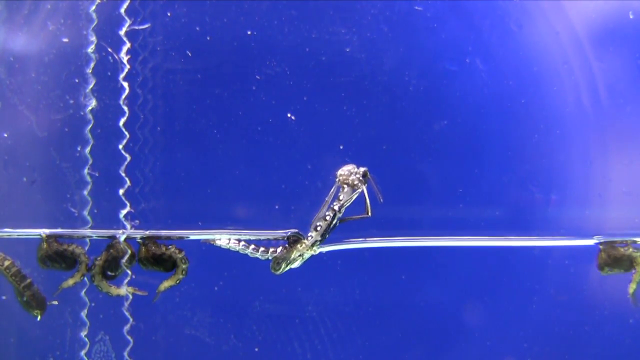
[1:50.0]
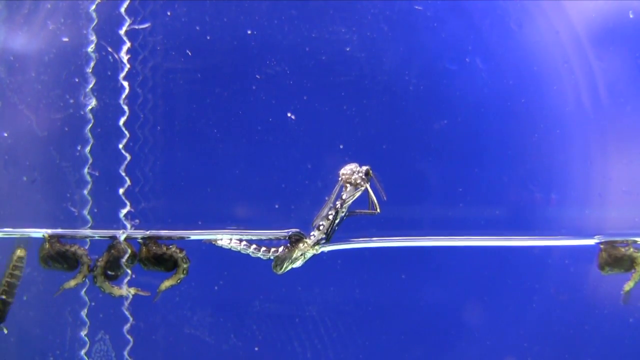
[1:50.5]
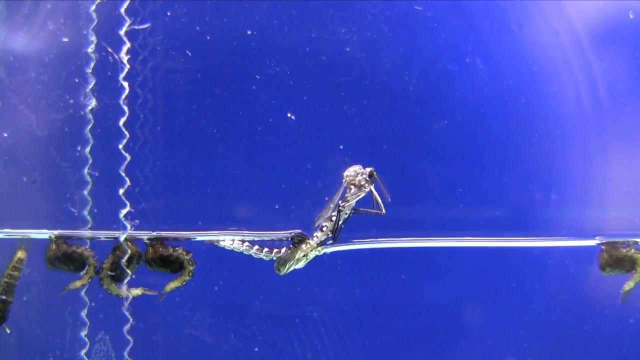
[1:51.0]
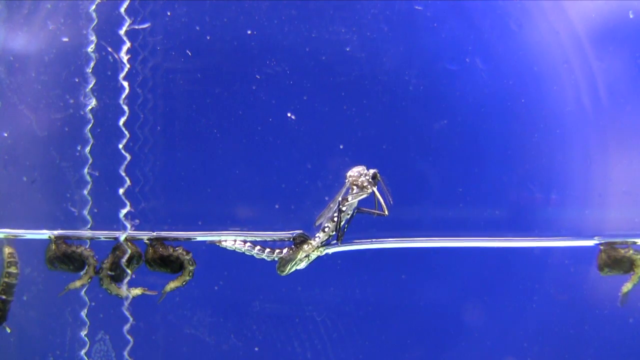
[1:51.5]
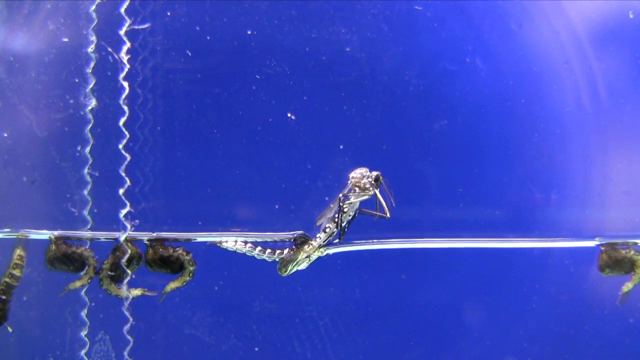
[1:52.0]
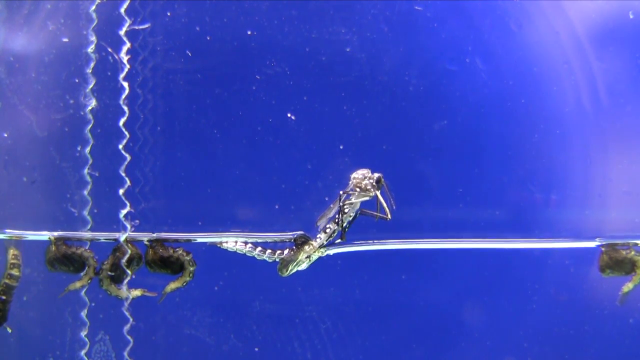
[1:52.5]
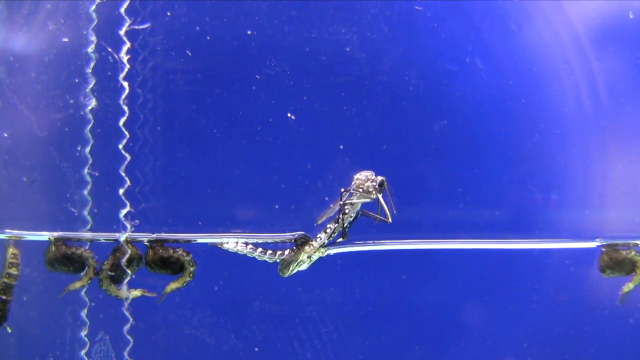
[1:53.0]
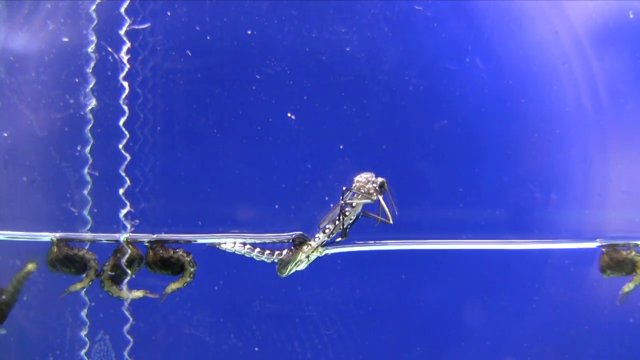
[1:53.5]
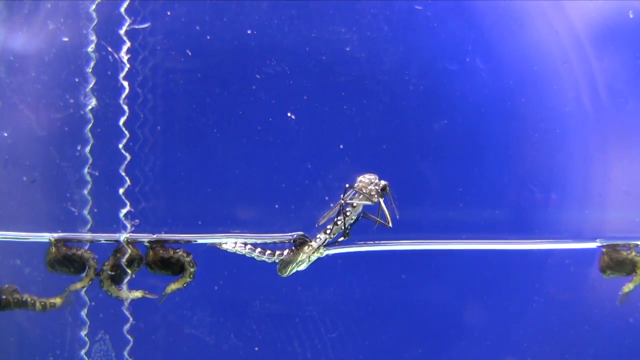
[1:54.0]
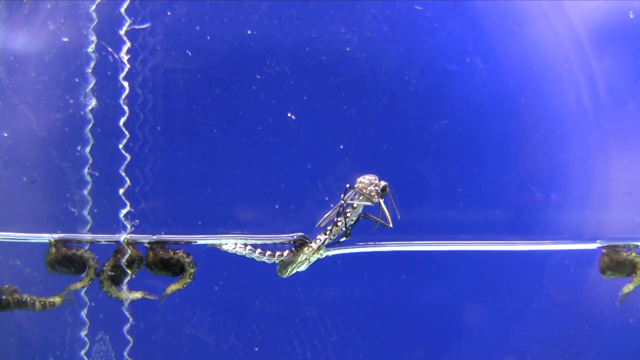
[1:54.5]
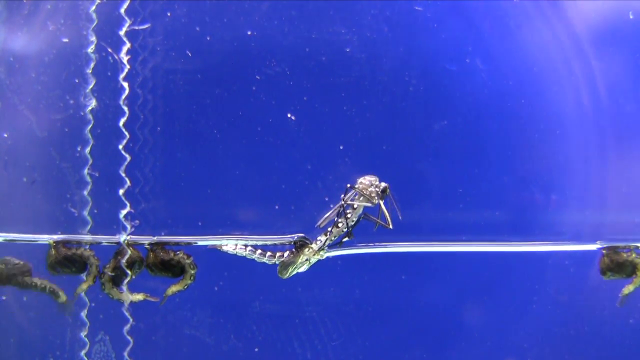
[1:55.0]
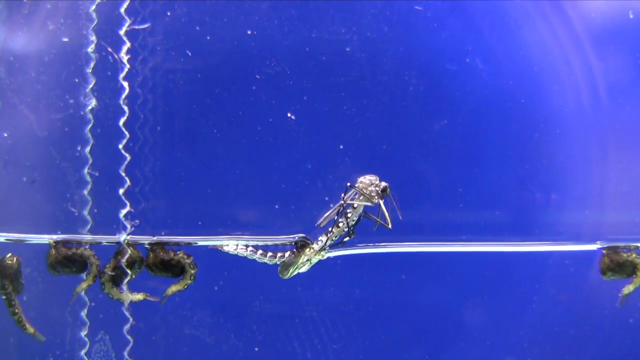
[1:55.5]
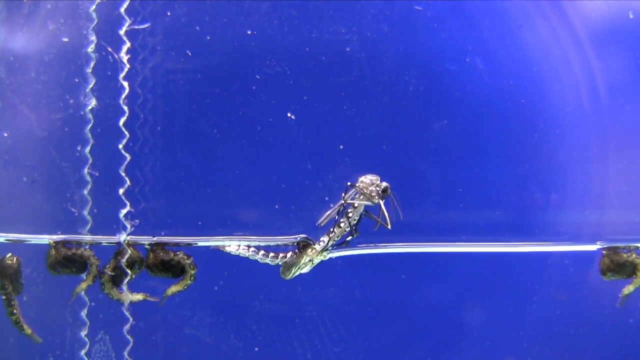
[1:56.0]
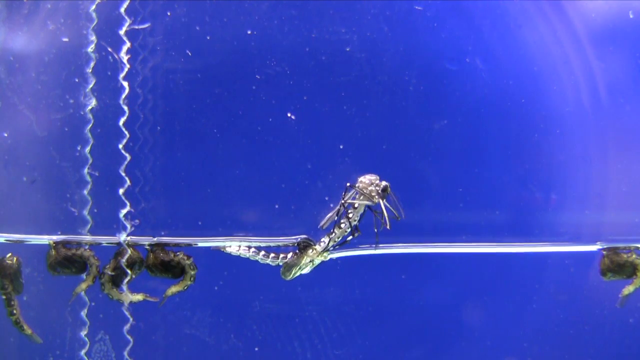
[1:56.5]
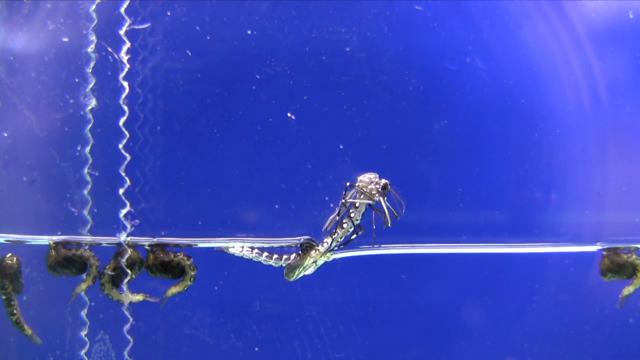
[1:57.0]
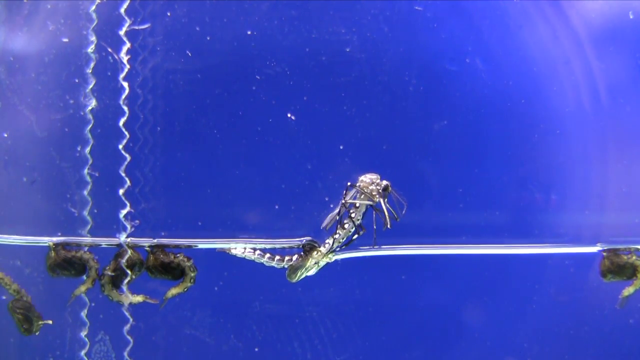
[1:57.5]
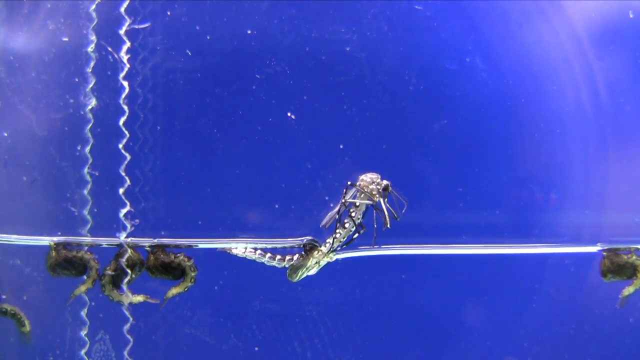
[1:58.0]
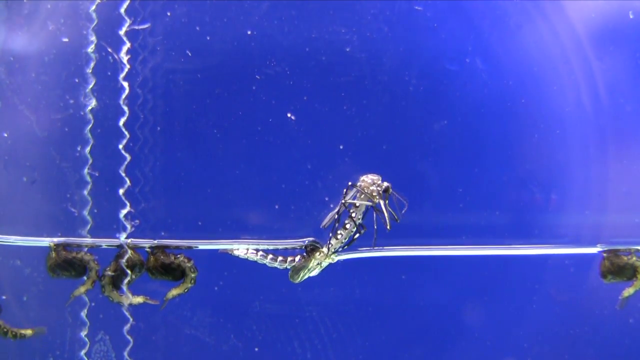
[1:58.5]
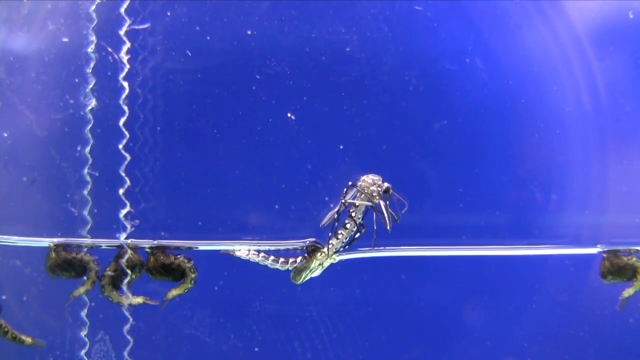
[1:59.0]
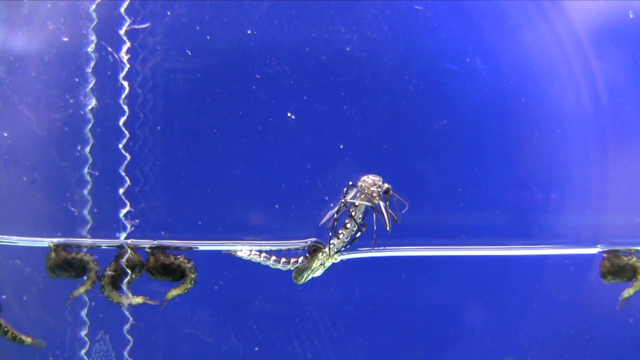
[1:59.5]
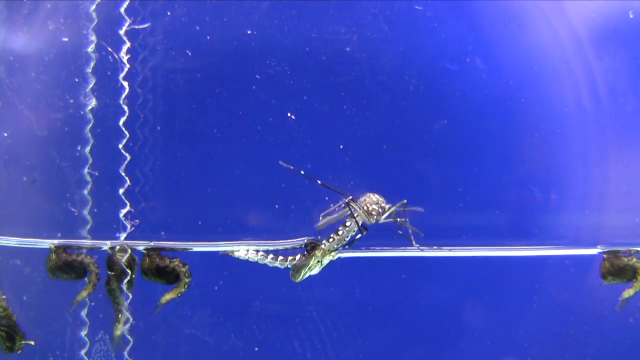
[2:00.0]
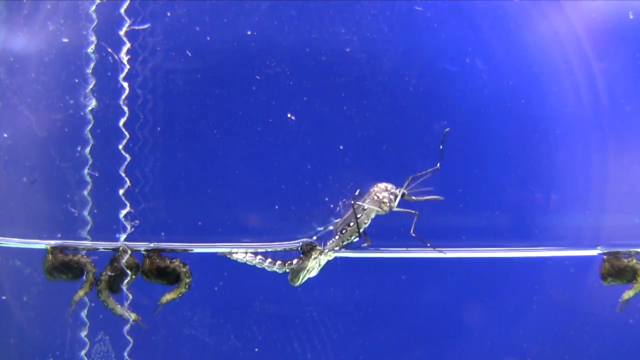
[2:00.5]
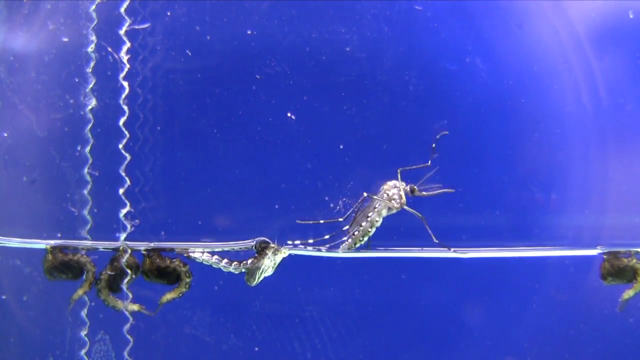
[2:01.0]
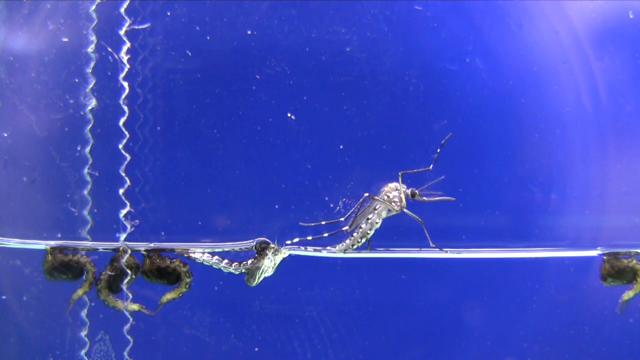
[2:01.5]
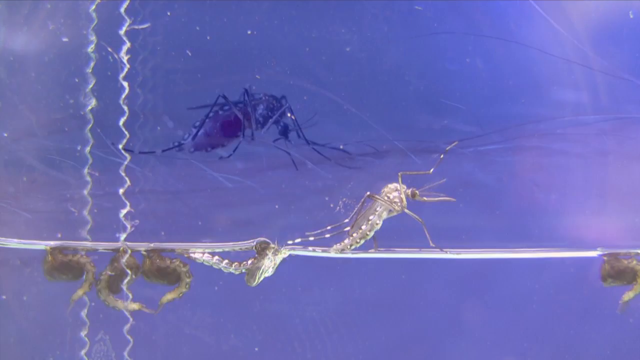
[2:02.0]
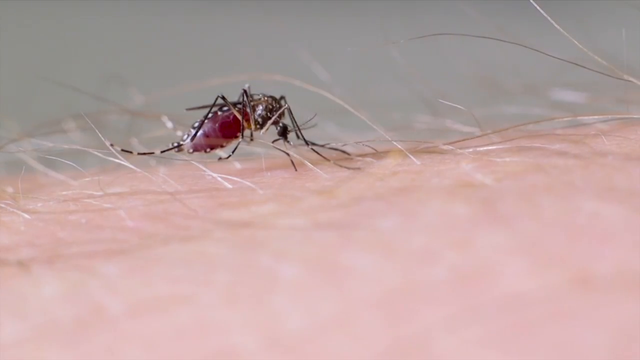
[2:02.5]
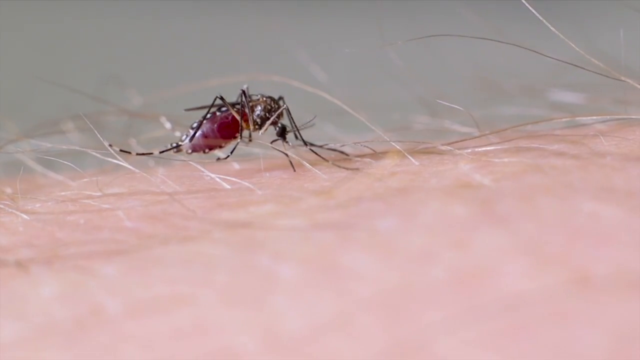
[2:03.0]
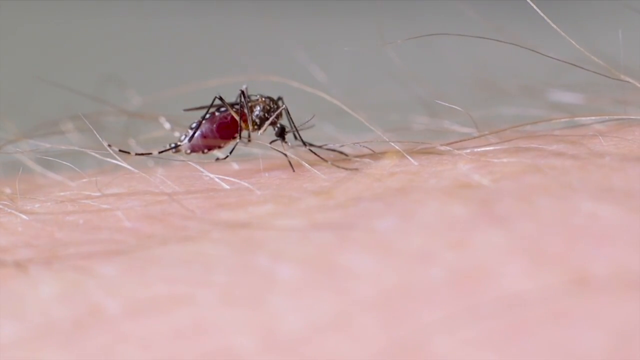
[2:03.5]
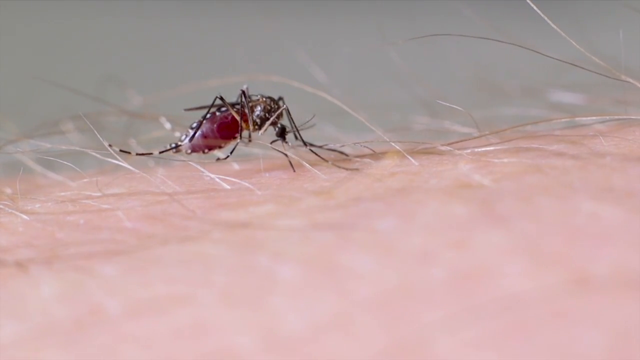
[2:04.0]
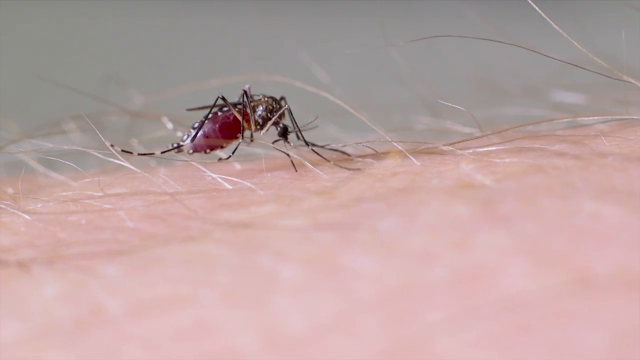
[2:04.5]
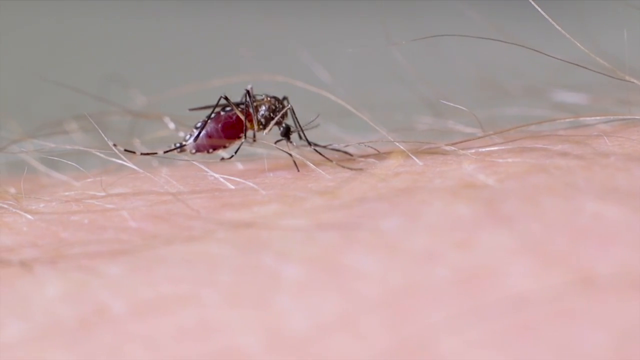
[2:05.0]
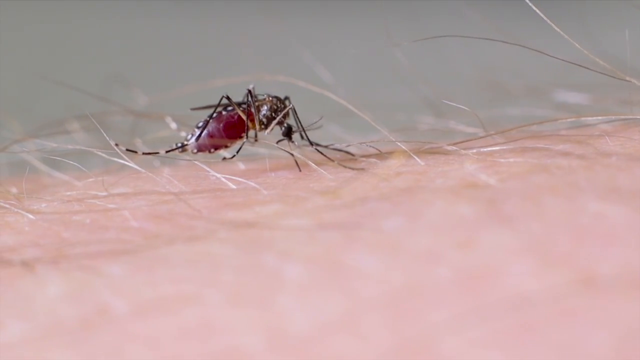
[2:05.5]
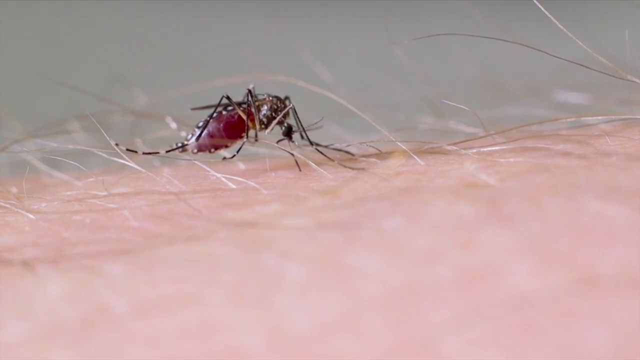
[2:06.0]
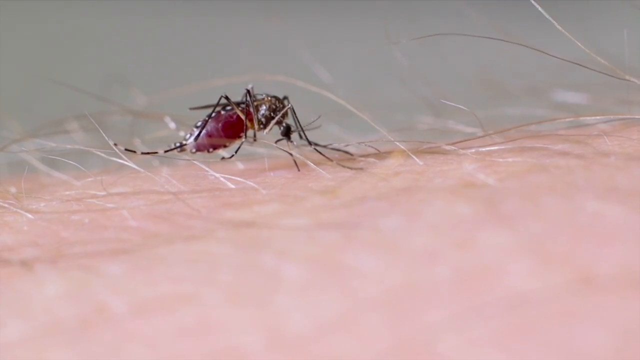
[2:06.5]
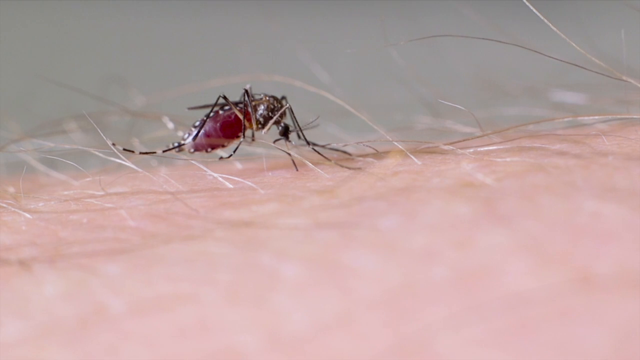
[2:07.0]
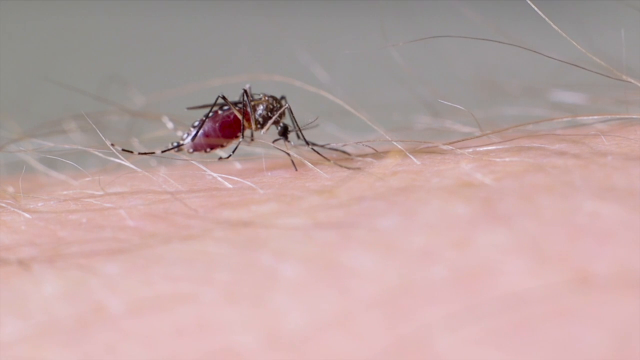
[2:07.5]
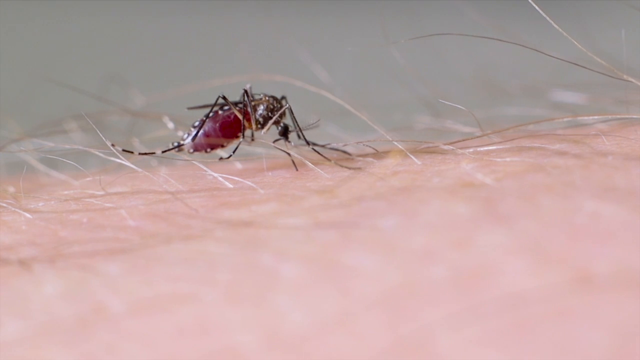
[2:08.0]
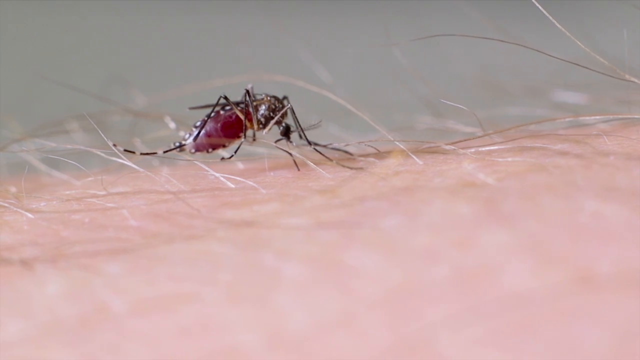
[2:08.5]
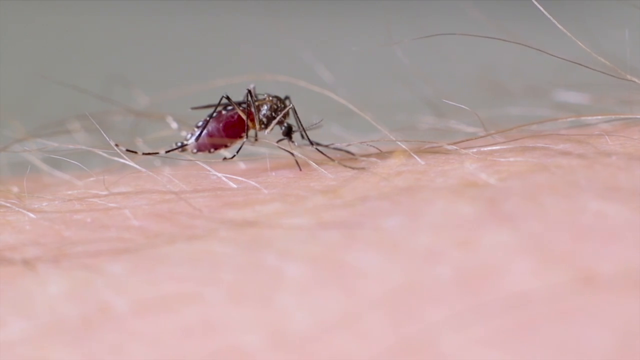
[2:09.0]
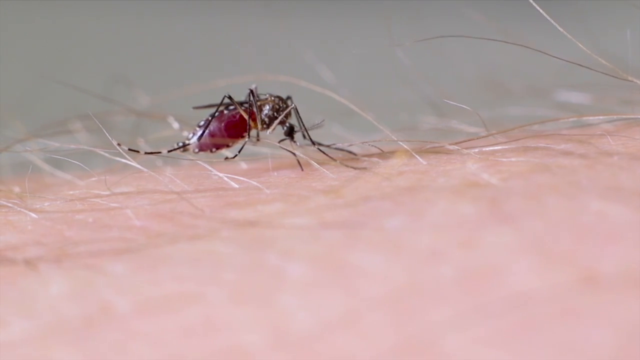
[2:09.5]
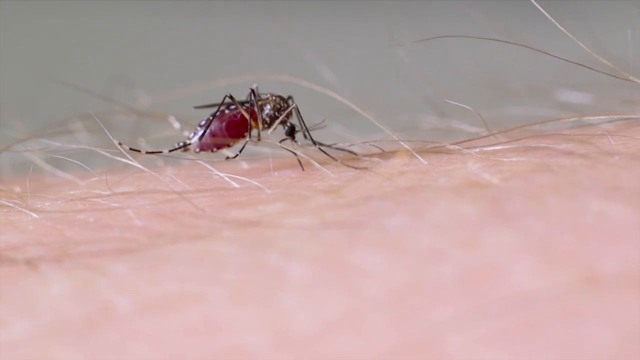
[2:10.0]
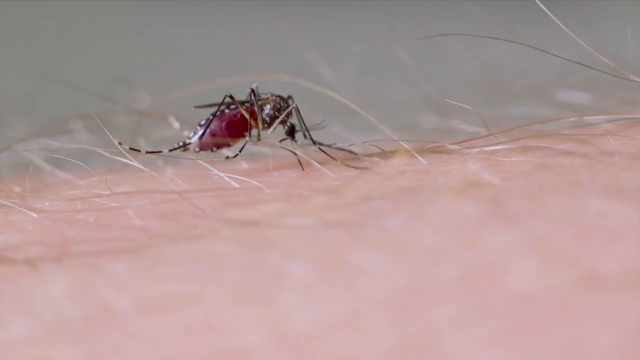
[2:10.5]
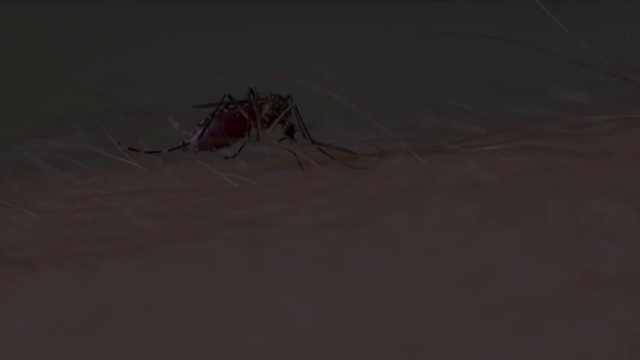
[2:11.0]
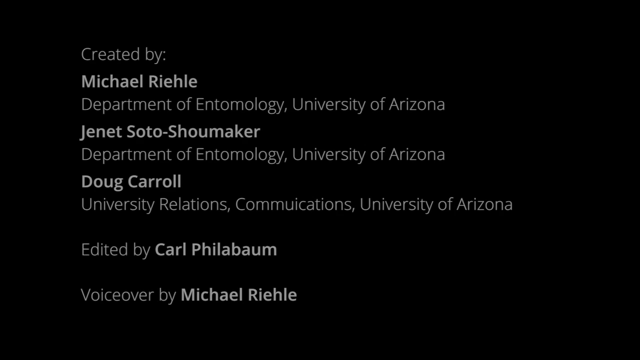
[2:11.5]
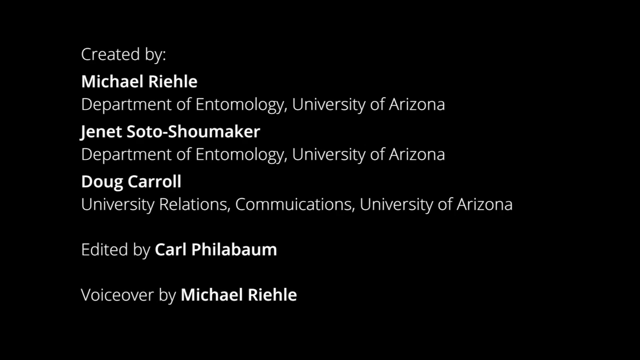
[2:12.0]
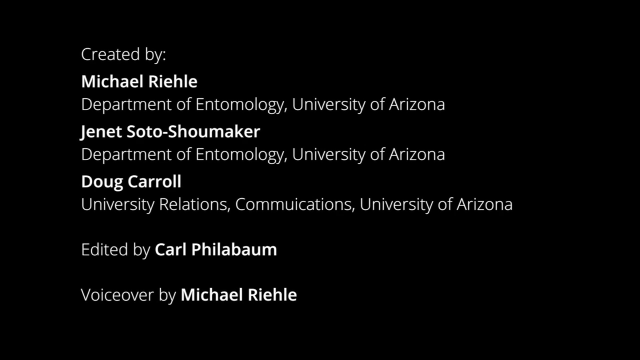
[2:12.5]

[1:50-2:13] The worm moves slowly along the silver strip, morphing into what looks like its final form, and moves slowly to the other end of the blue container. The others are still lying just below the water. The one worm eventually manages to detach itself from the cocoon. The scene then changes to a mosquito on top of an arm, looking a bit reddish in color, lying on the arm. A final screen shows the credits: Michael Ryle of the Department of Entomology at the University of Arizona, Jeanette Soto-Shumaka from the same department at the University of Arizona, Doug Carroll, editing by Carl Pilabam, and voiceover by Michael Ryle.